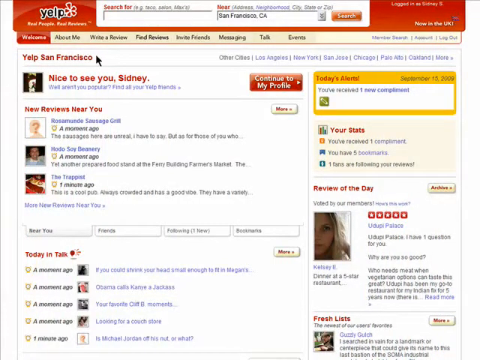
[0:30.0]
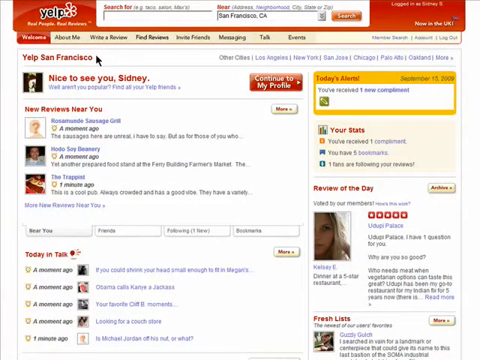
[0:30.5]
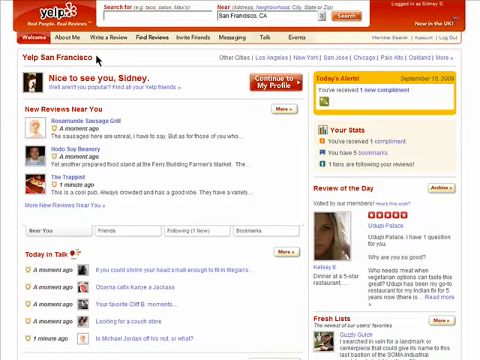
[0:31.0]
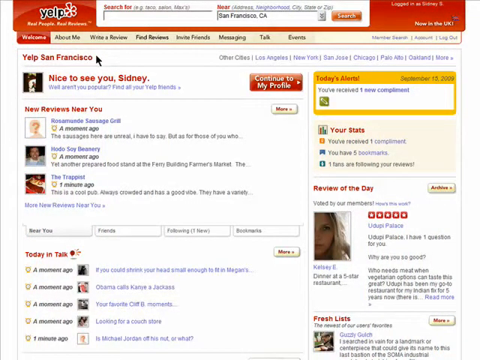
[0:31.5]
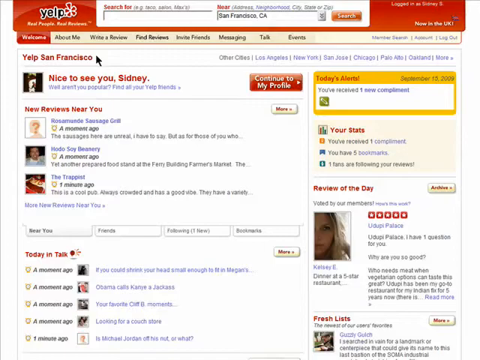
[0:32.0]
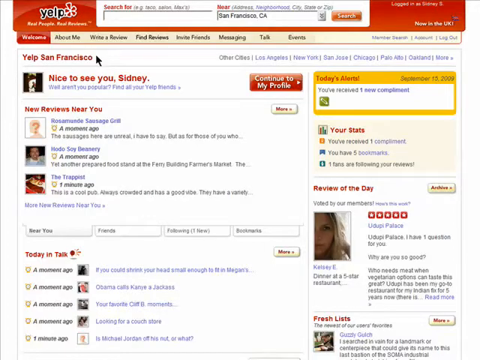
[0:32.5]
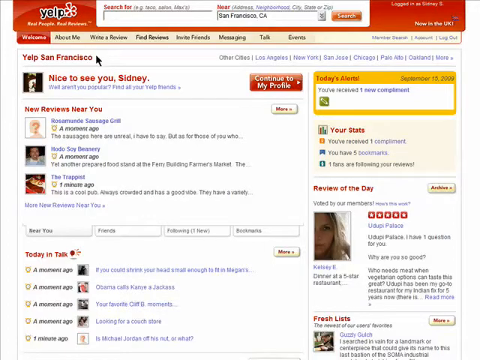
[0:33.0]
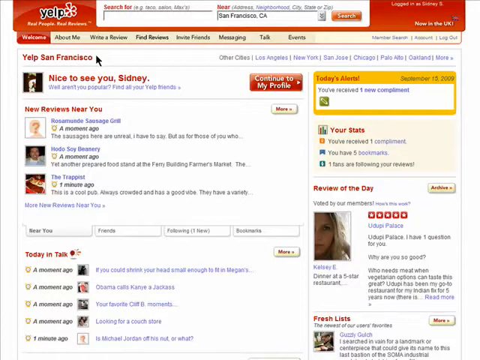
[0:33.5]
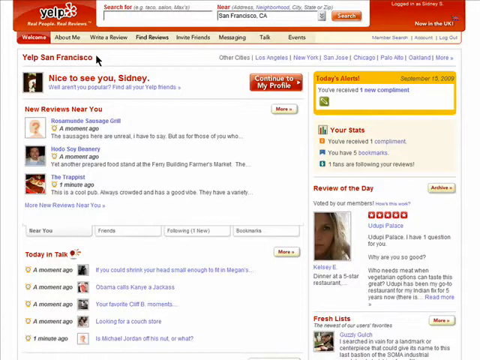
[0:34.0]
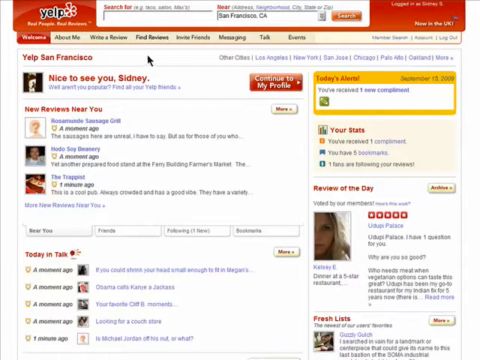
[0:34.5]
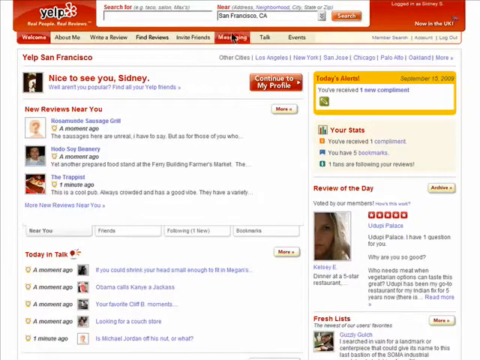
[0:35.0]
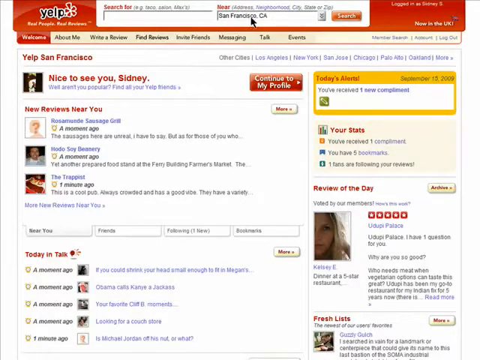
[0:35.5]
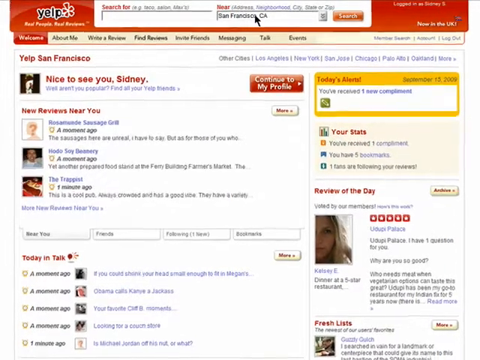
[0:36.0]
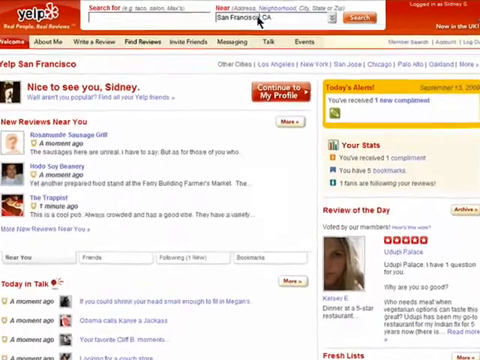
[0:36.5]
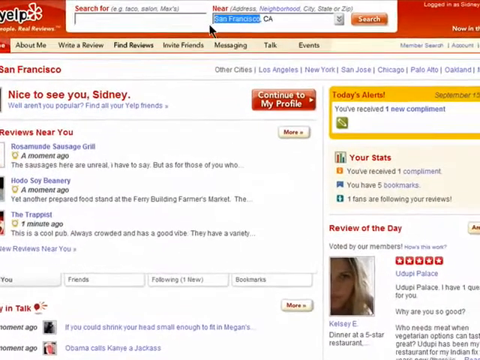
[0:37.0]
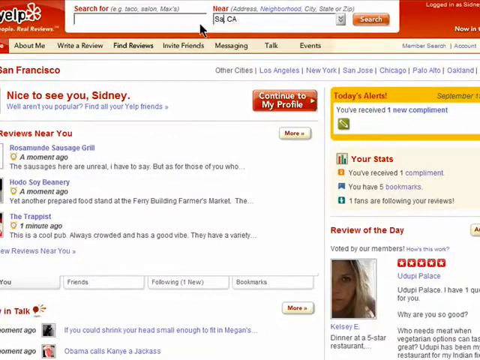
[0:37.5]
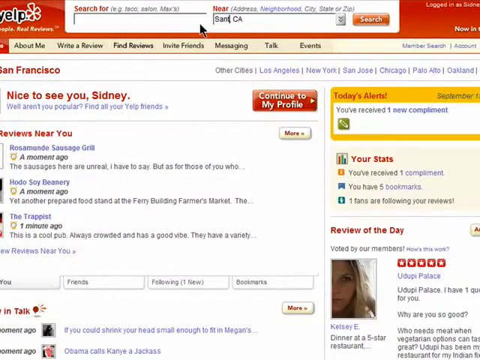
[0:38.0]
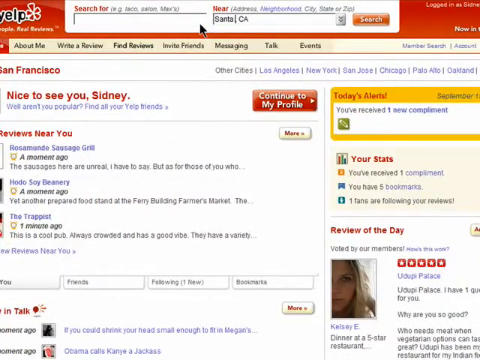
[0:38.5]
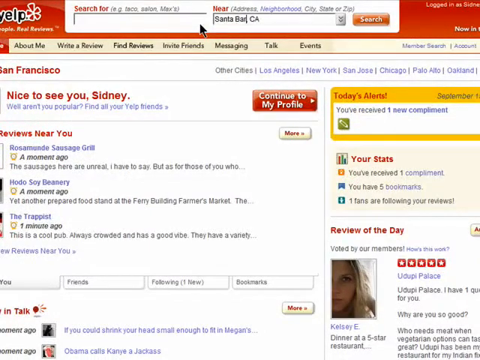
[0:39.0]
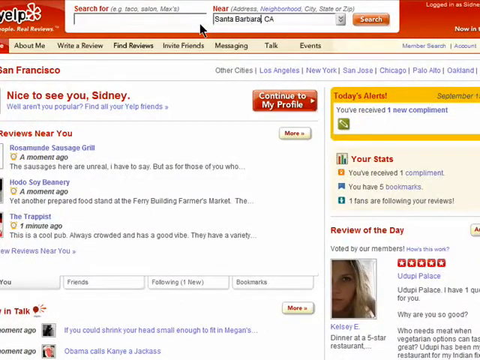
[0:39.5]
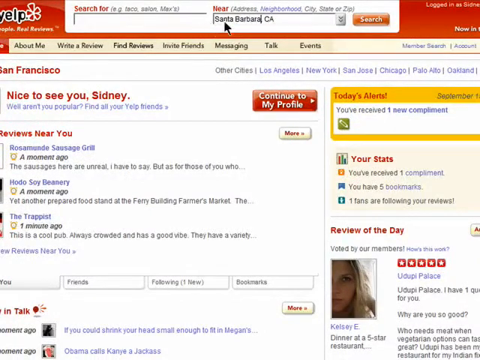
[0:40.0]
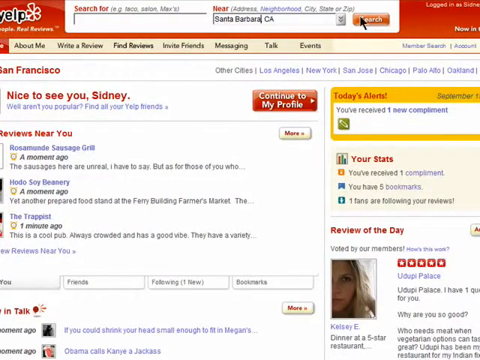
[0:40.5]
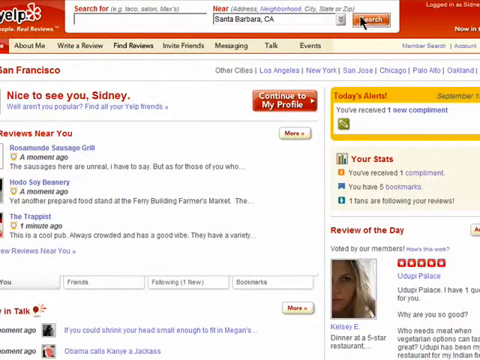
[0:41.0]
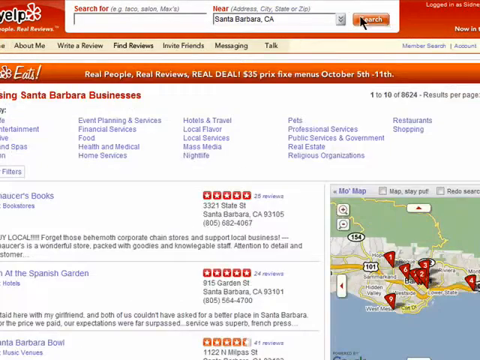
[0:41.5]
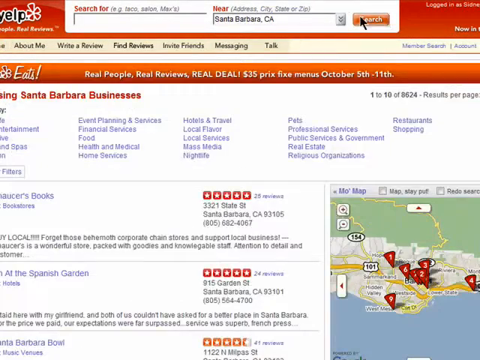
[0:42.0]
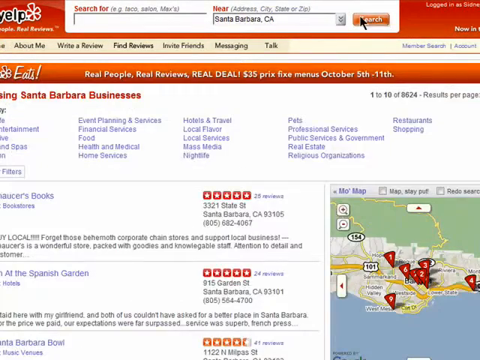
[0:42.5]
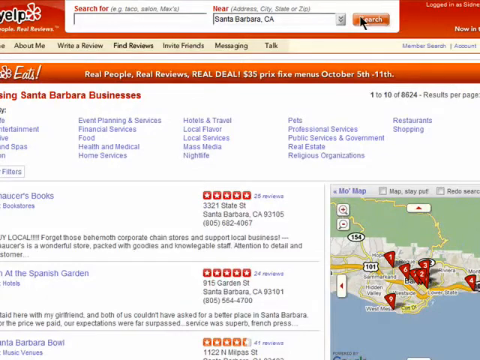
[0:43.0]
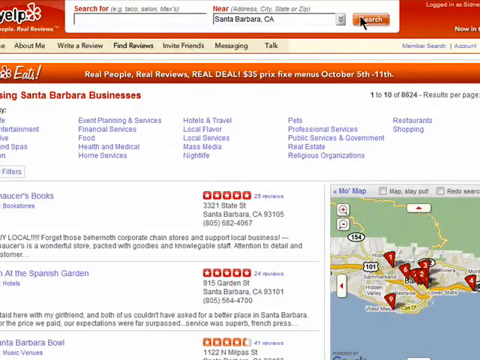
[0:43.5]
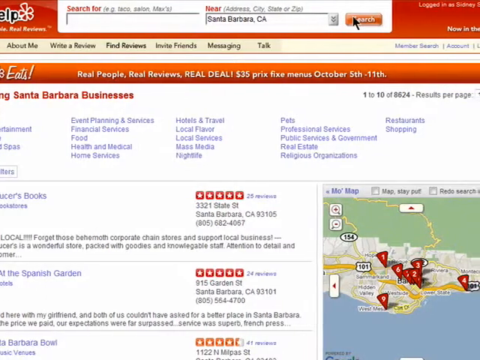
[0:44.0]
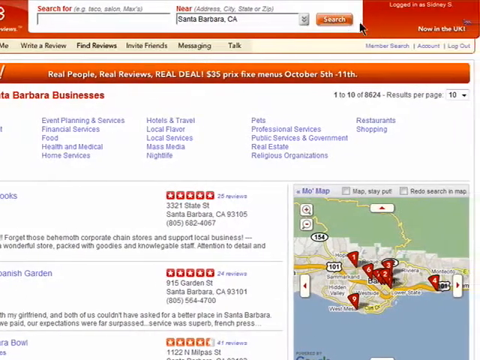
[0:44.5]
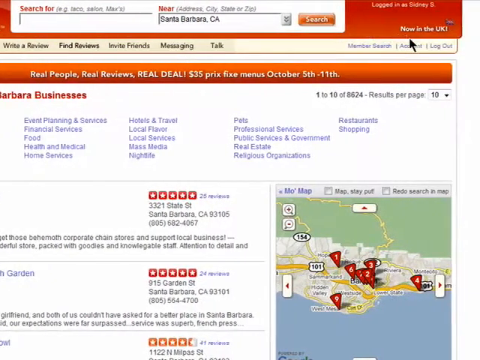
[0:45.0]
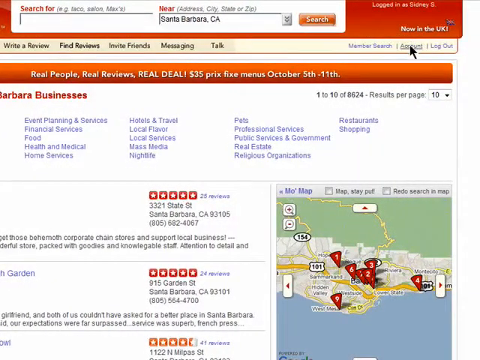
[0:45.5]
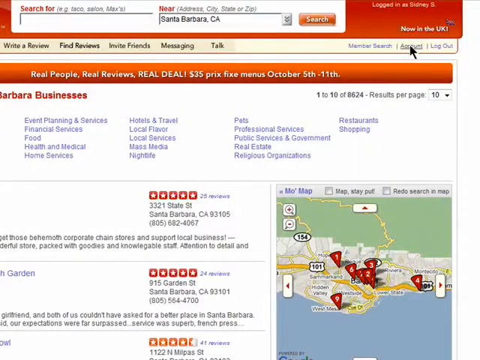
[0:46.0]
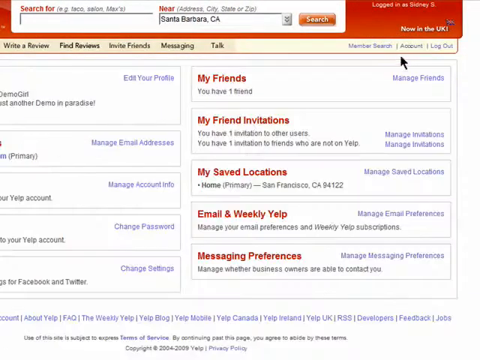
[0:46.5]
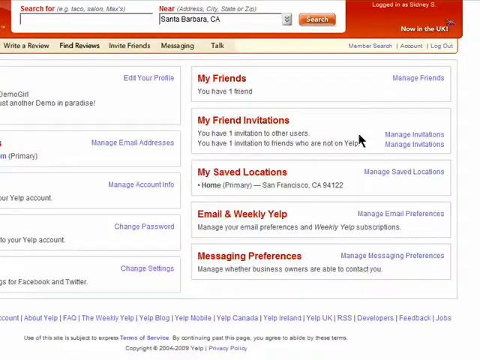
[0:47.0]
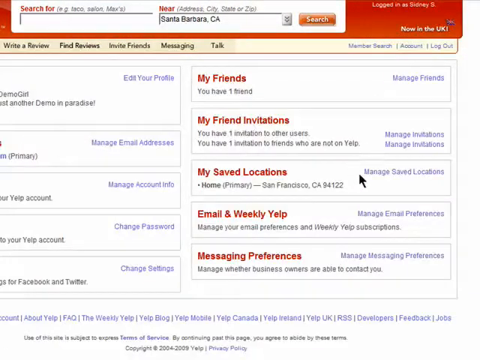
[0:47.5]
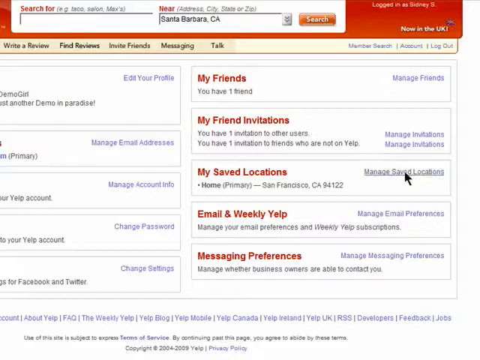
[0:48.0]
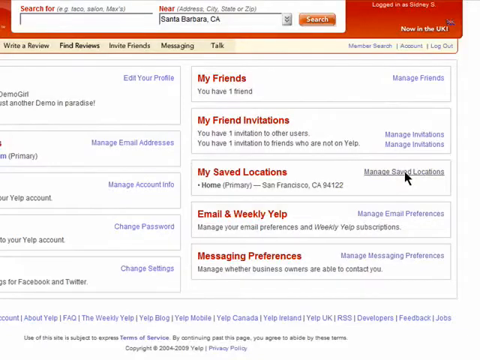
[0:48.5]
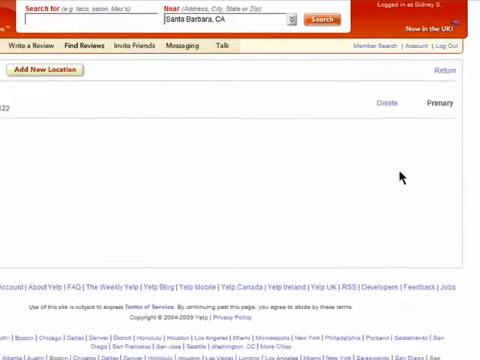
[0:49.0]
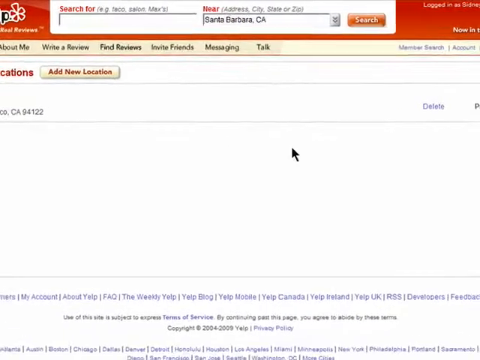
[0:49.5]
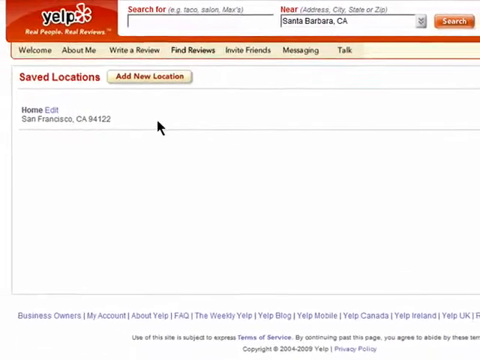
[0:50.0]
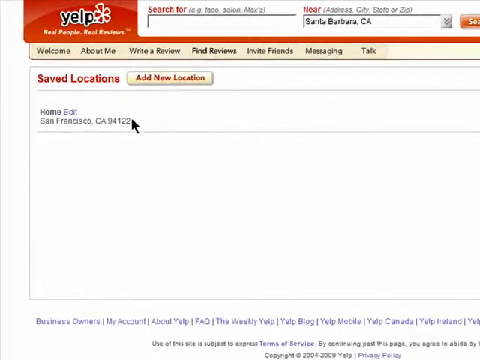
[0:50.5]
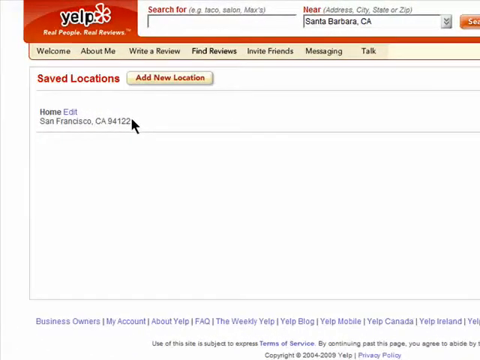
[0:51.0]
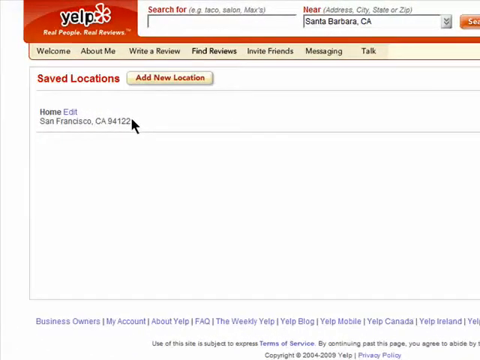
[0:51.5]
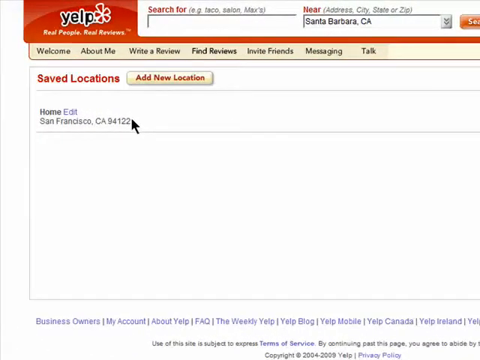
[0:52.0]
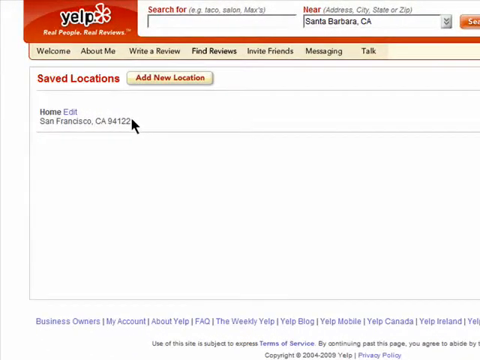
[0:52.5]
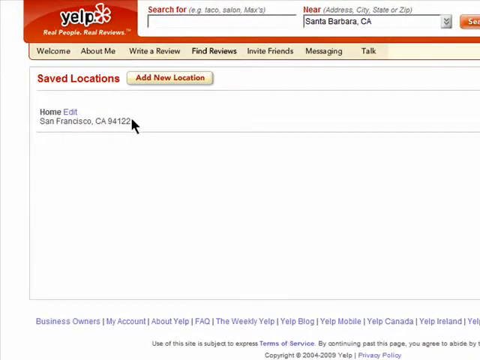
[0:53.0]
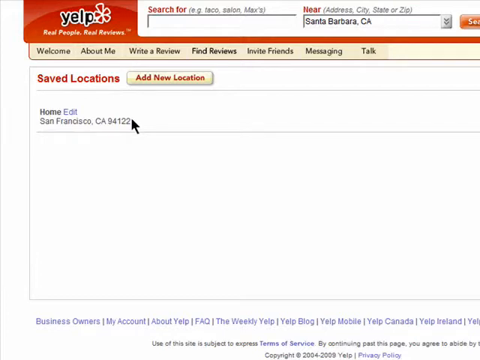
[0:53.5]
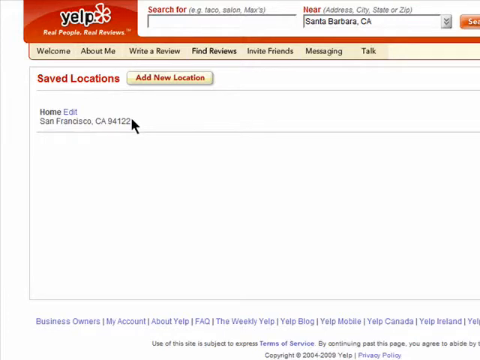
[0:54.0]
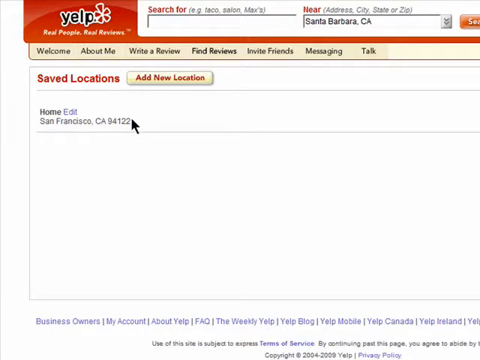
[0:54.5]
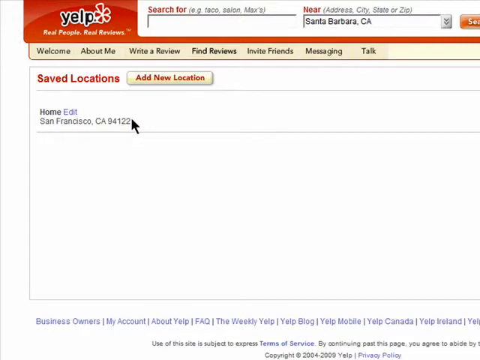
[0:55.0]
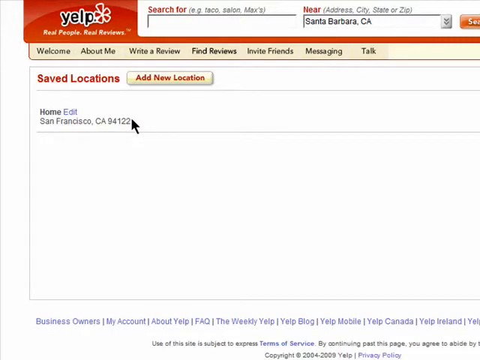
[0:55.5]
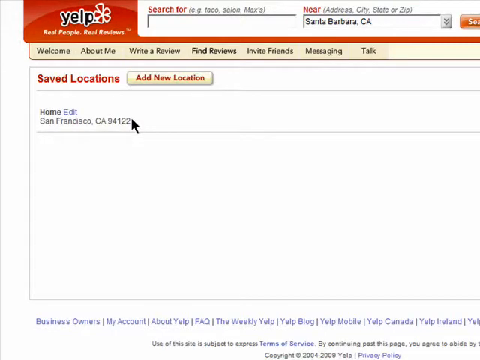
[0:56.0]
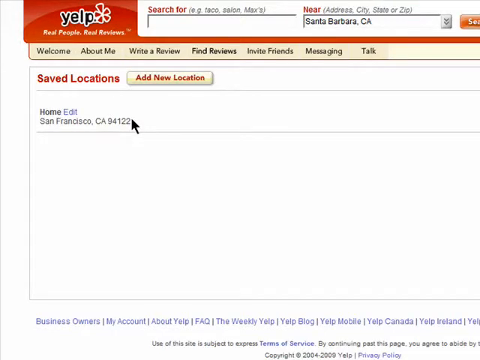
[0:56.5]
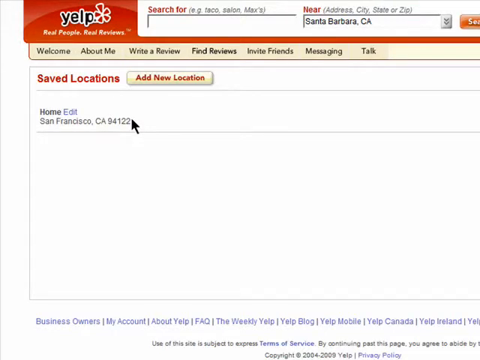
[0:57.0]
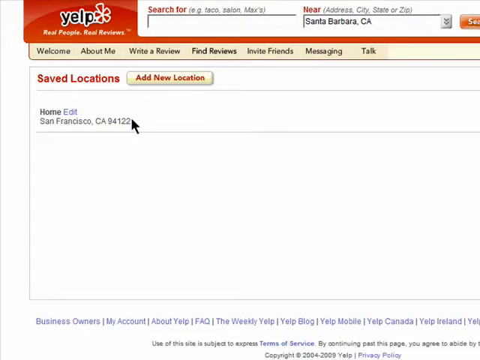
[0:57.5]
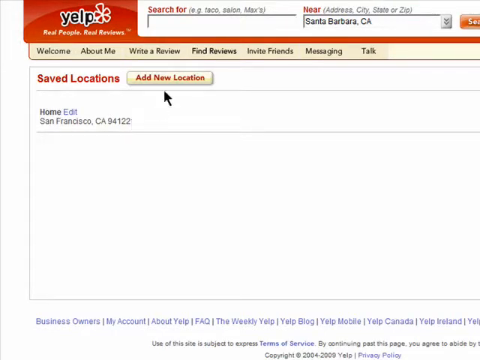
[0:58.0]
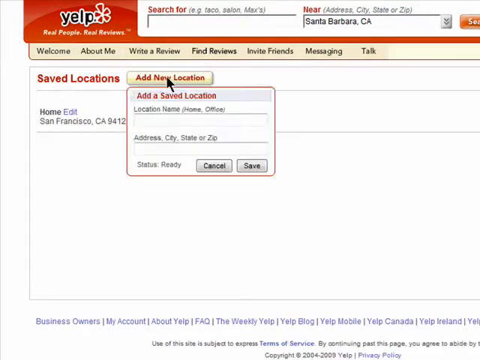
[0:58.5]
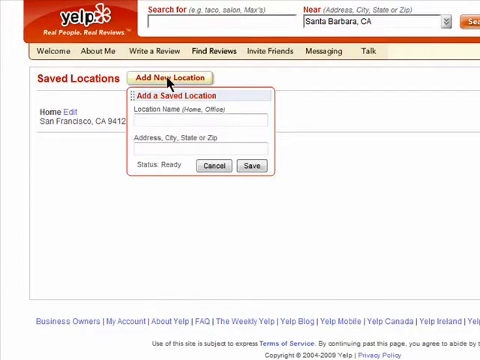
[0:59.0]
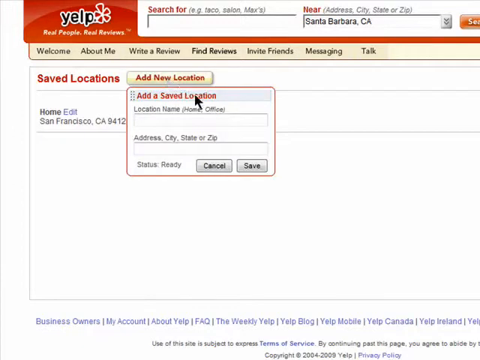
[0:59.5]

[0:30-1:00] A Yelp page has a red banner with a white search bar in it. Under the red banner are buttons for About Me, Write a Review, Find Reviews, Invite Friends, Messaging, Talk and Events. Below them, the page specifies that this is Yelp San Francisco, and under that is a greeting saying it is very nice to see you; the logged-in user is Sydney. Under that are reviews for listings near where Sydney lives, and below that is a Today and Talk section where people have conversations. The view zooms in to the text box, the arrow types in Santa Barbara and clicks Search. The website changes to a new page about Santa Barbara businesses, the view zooms to the right, and the arrow clicks Accounts. This opens a new page listing account-related functions, and the arrow goes down and clicks Manage Saved Locations. The arrow then clicks on the saved location, San Francisco.